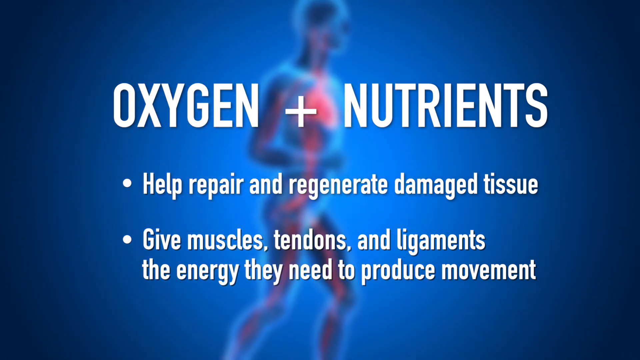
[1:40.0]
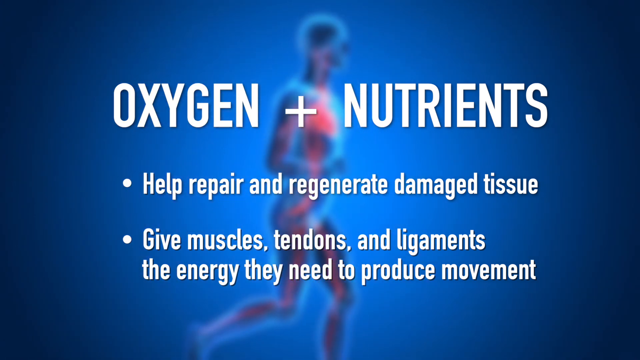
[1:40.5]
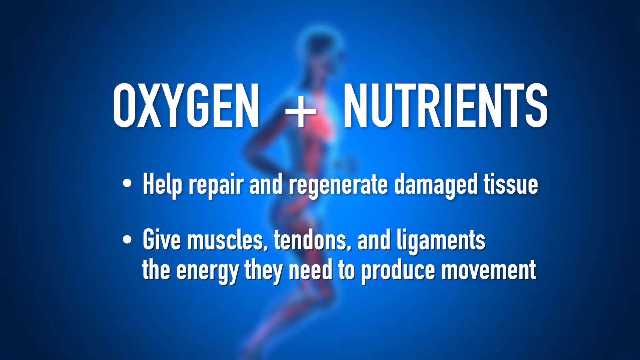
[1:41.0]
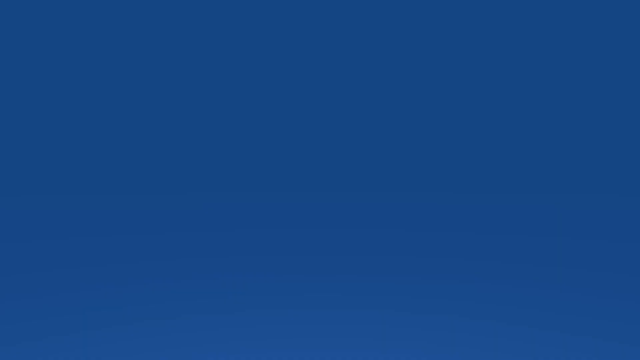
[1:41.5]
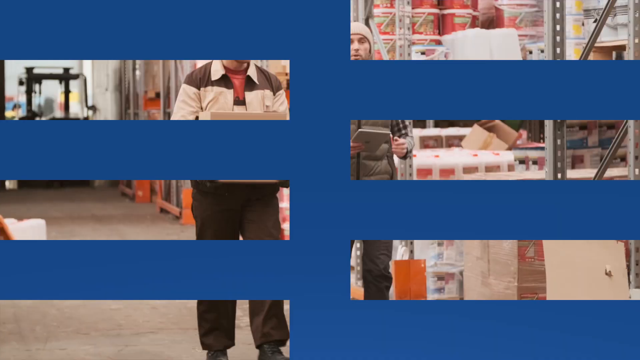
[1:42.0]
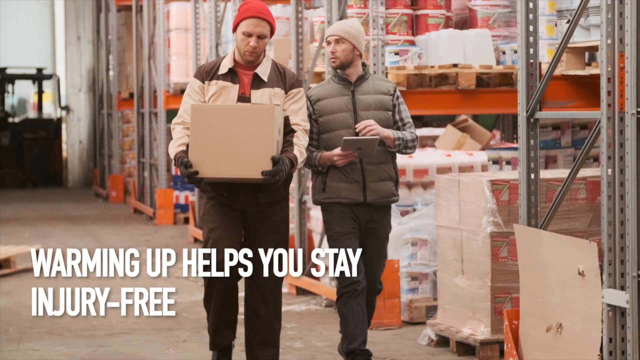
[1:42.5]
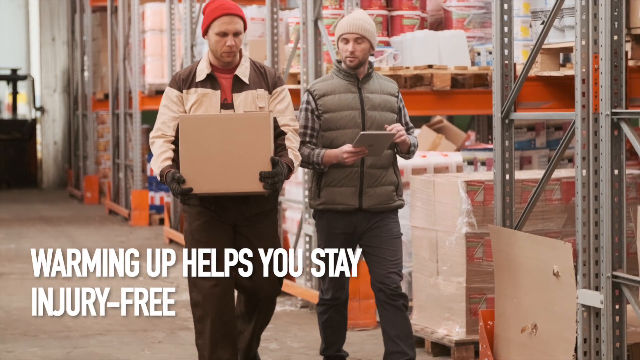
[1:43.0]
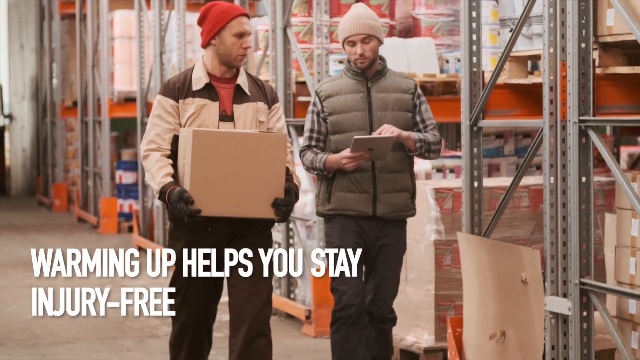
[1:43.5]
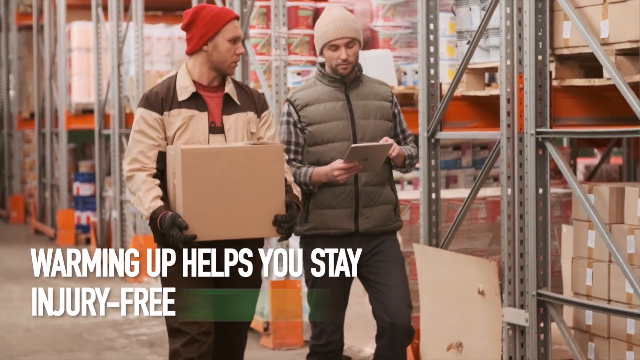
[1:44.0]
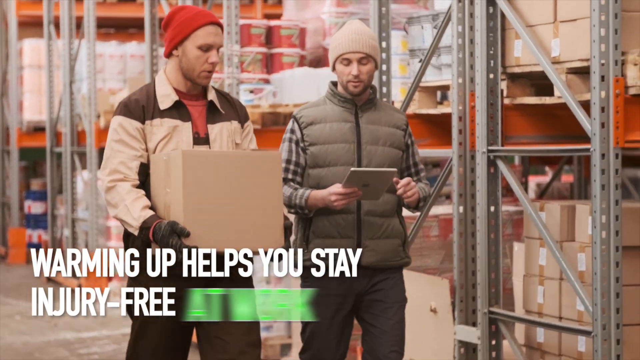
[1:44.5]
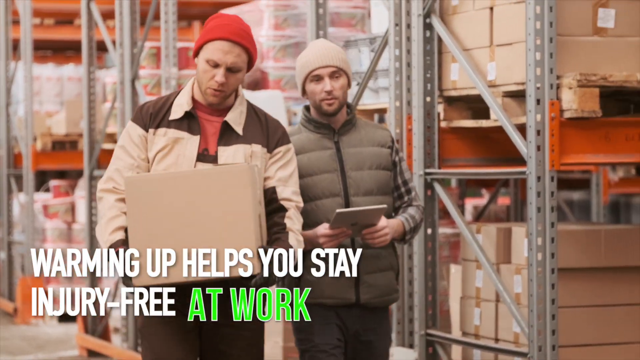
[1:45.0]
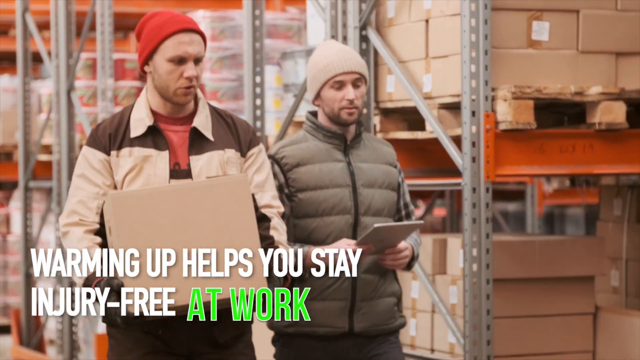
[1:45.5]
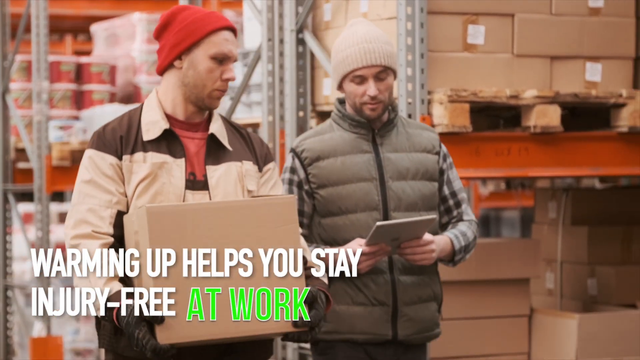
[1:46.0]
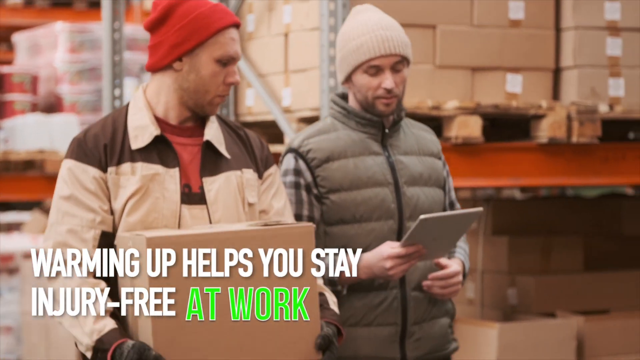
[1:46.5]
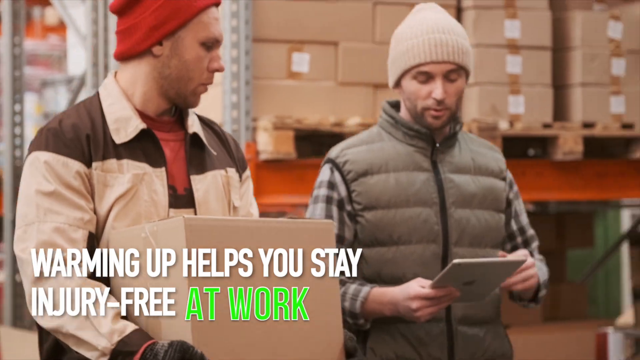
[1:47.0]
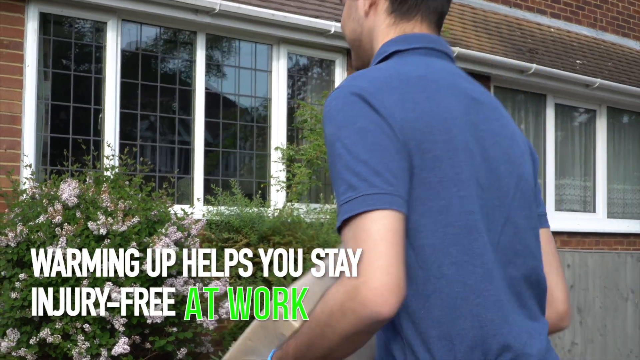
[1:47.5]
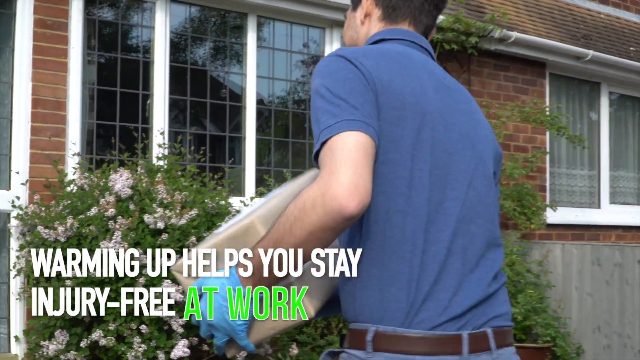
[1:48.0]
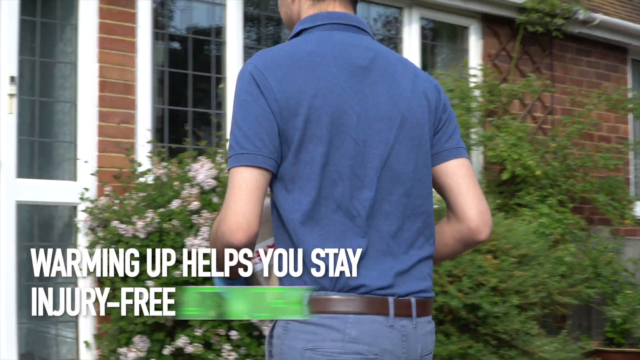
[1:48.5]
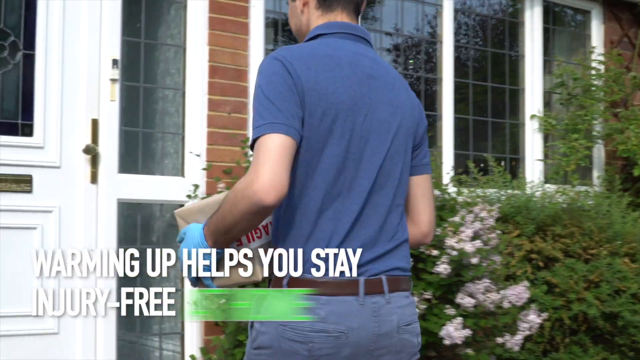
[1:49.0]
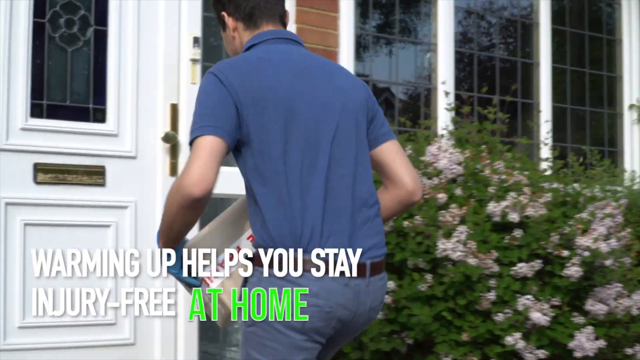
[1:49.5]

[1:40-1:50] Two men walk through some sort of warehouse, both dressed in winter clothing and both appearing to be in their 20s. The man on the left carries a square cardboard box and wears gloves and a red hat. The man on the right wears a puffy vest and a beige hat and holds an iPad. Words in the corner of the screen read "warming up helps you stay injury-free at work", with "at work" in green letters. The video then cuts to a person in a polo shirt in an outdoor setting, seemingly on a summer day, walking up to a house to deliver a package.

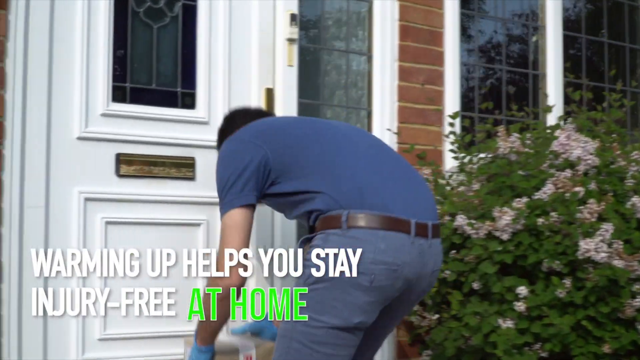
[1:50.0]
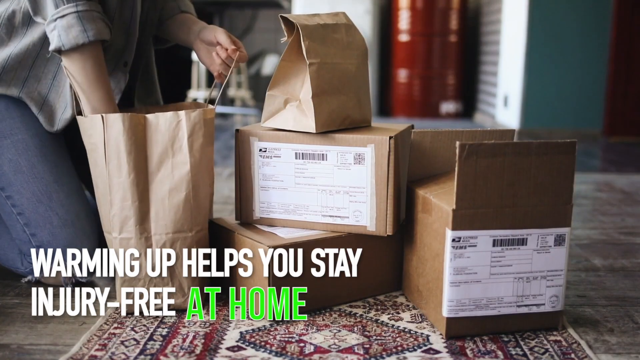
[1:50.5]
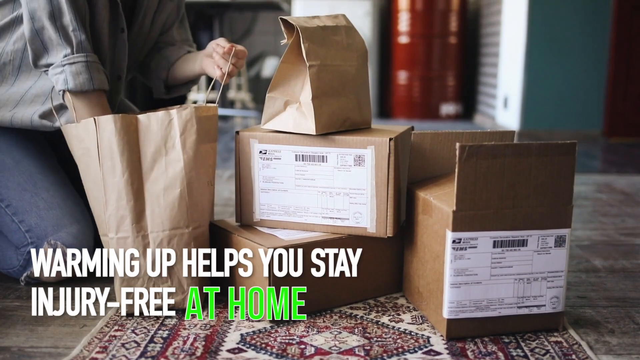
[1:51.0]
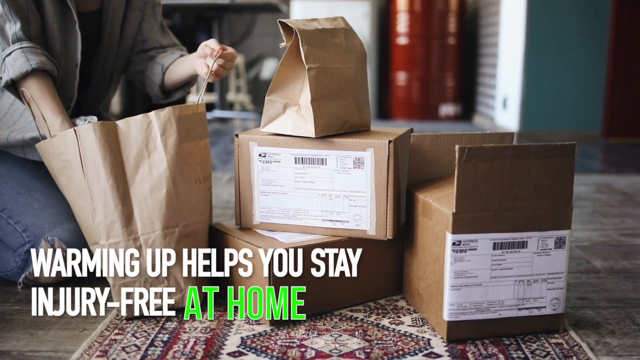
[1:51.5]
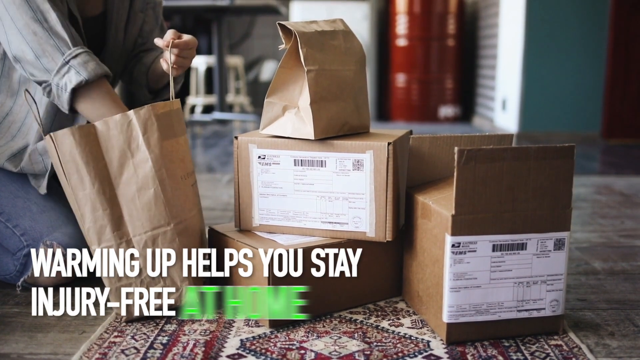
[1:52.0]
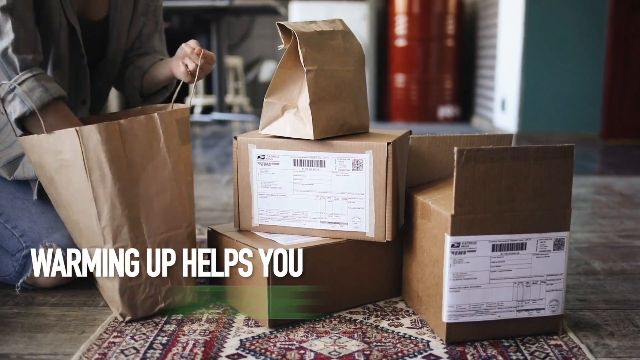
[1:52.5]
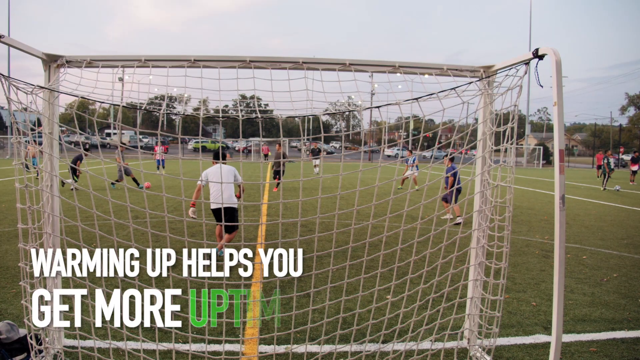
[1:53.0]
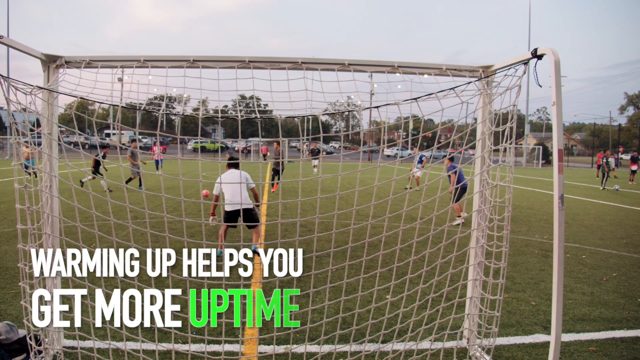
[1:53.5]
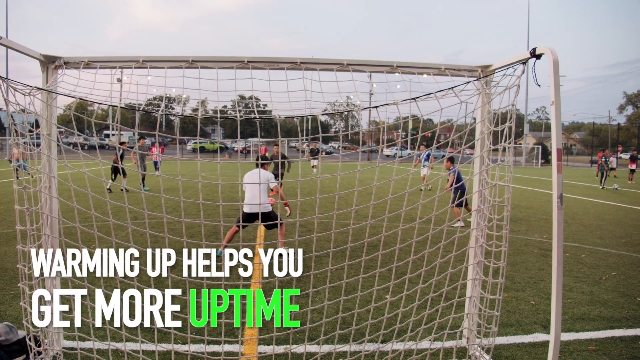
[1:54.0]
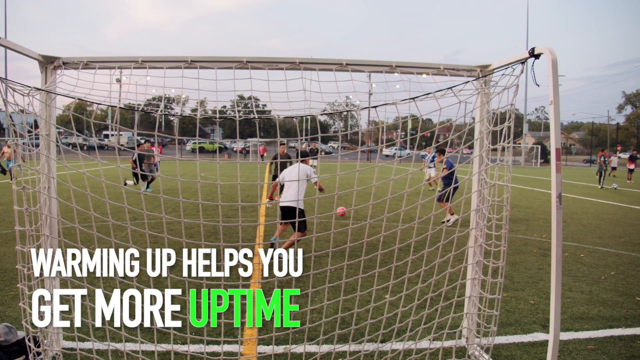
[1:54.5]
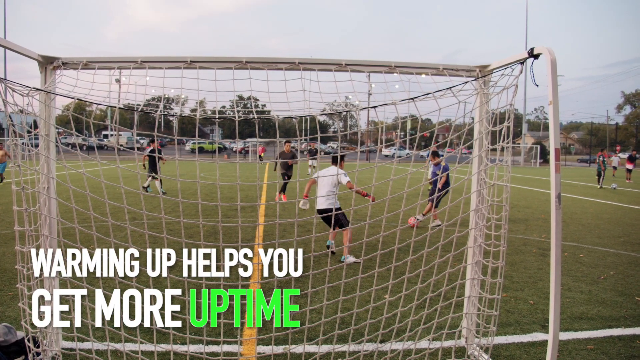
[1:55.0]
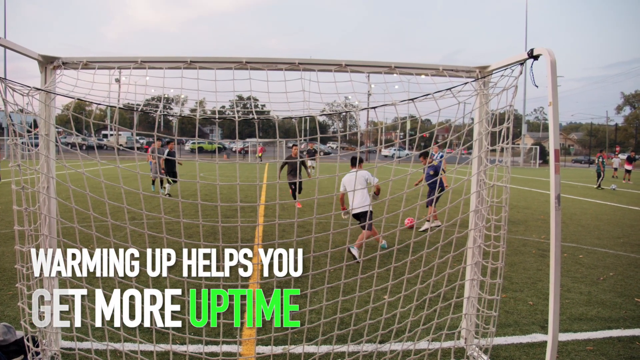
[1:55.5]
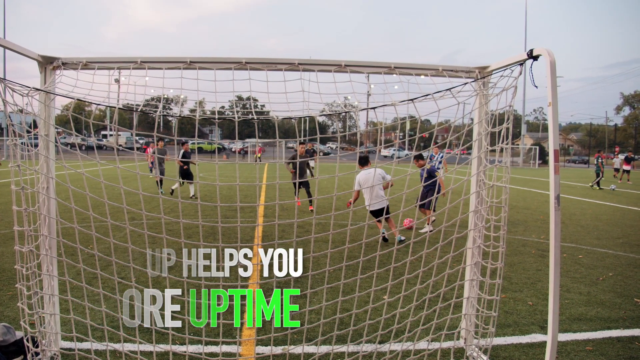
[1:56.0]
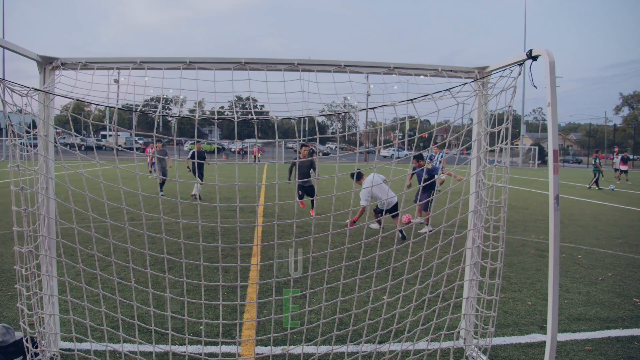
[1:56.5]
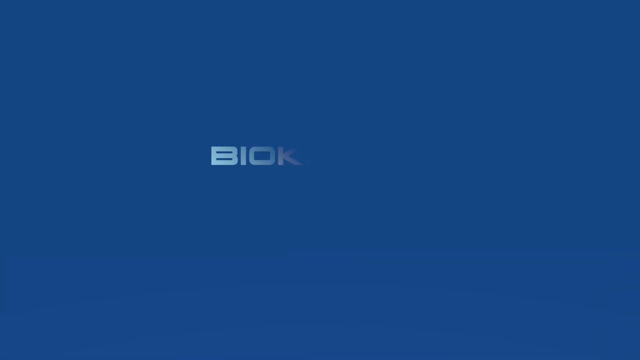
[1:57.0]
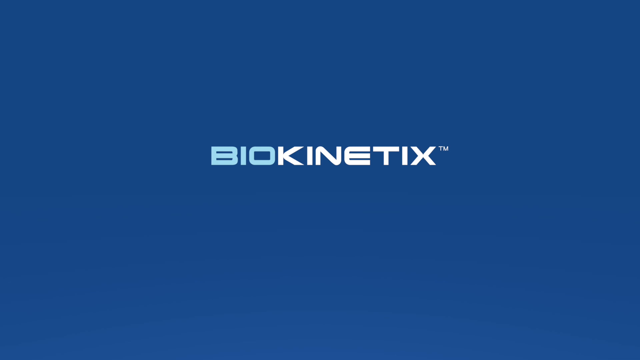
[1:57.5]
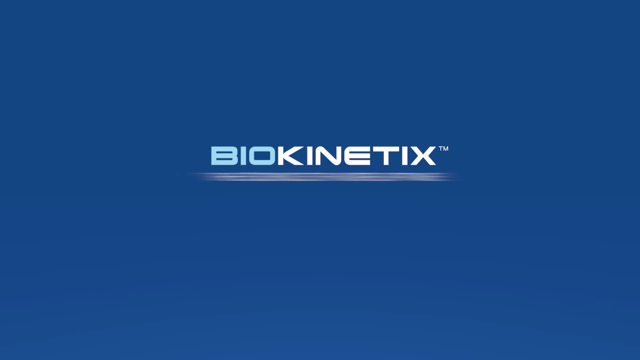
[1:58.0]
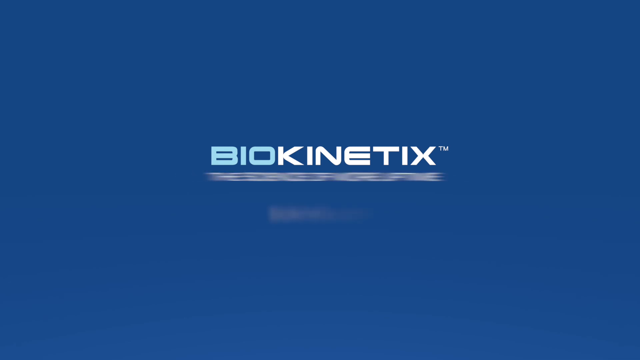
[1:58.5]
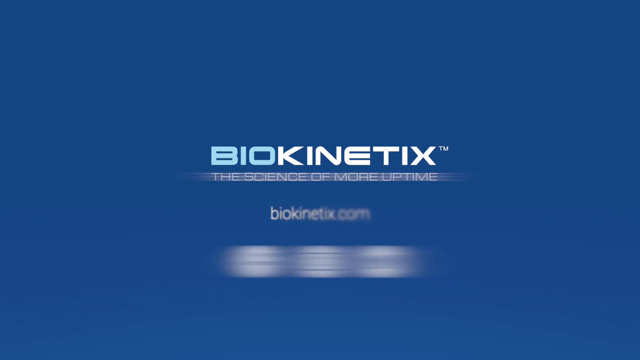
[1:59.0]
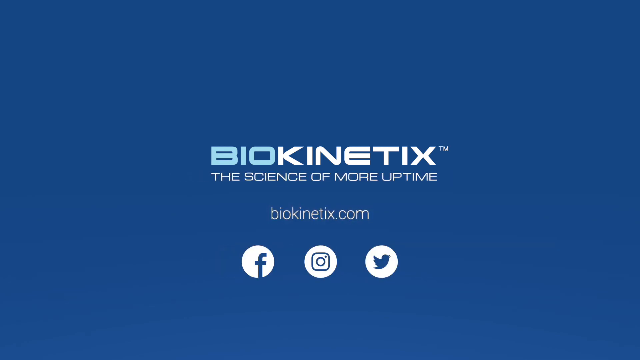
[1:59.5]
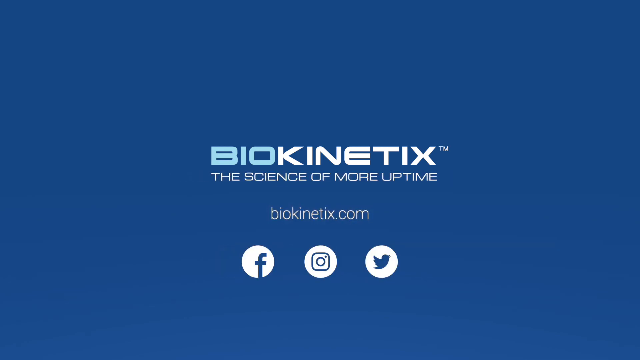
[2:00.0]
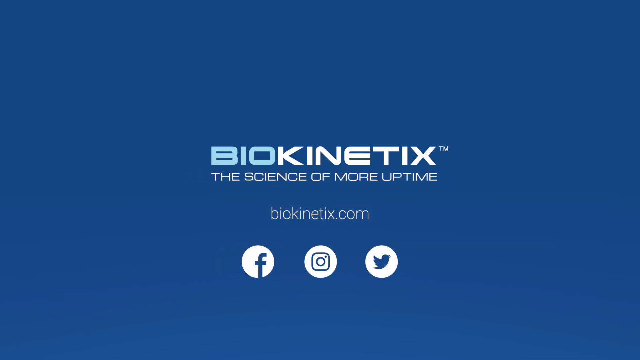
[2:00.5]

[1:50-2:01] As the person delivers the package, words in the bottom left corner of the screen read "warming up helps you stay injury-free at home", with "at home" in bold green letters. The video cuts to the interior of the home, where there is a variety of packages and bags with the person. It then cuts to a soccer match showing multiple players on the field and a person in front of a net. The lettering in the corner now reads "warming up helps you get more uptime", with "uptime" in green. The presentation ends with the word "biokinetics" on the screen once again.